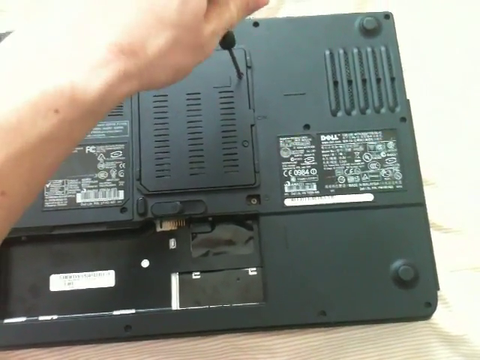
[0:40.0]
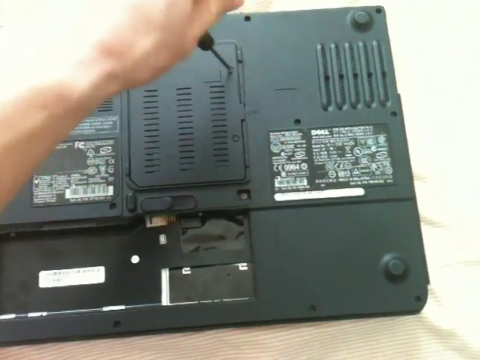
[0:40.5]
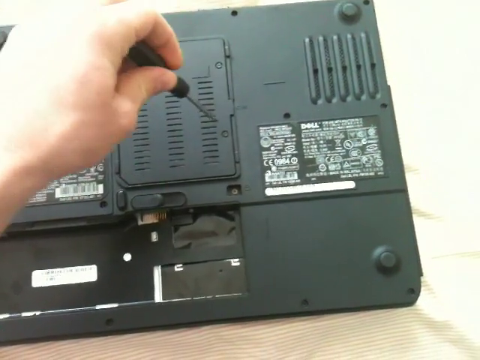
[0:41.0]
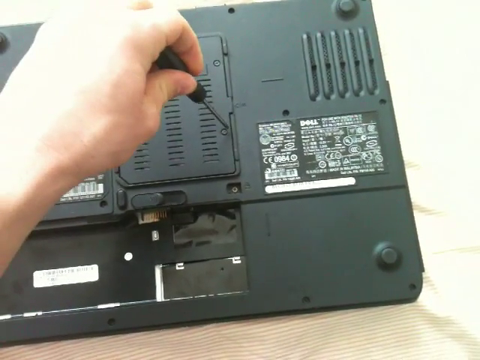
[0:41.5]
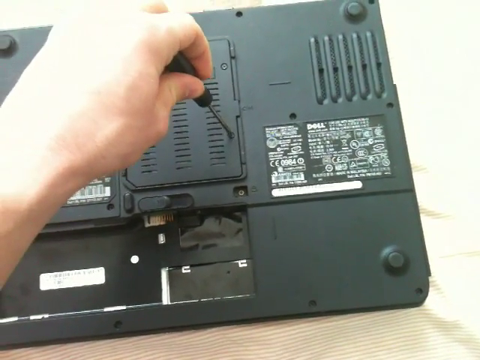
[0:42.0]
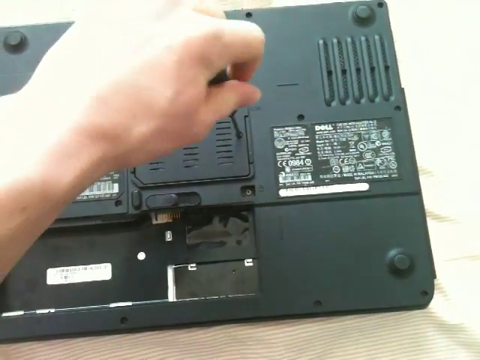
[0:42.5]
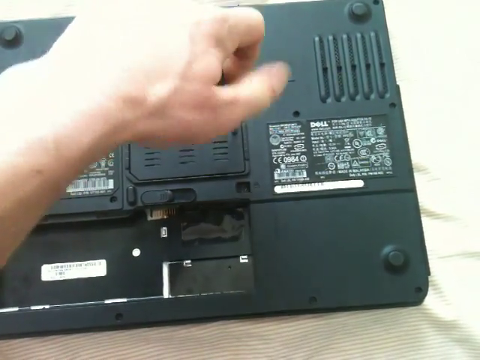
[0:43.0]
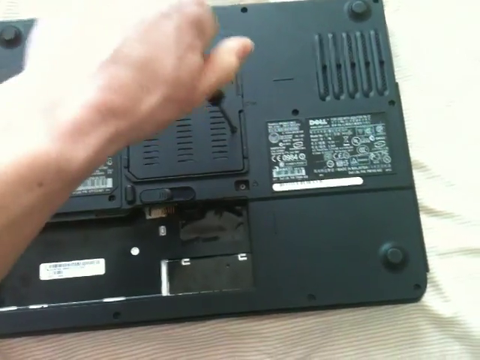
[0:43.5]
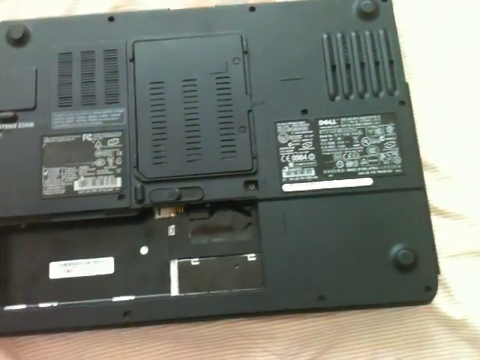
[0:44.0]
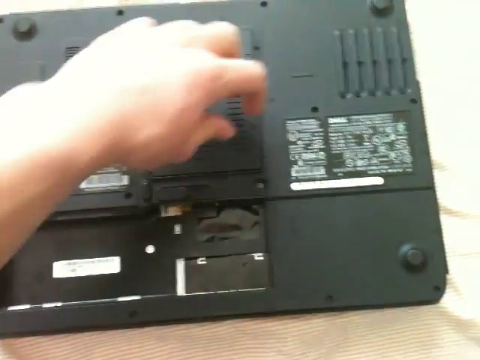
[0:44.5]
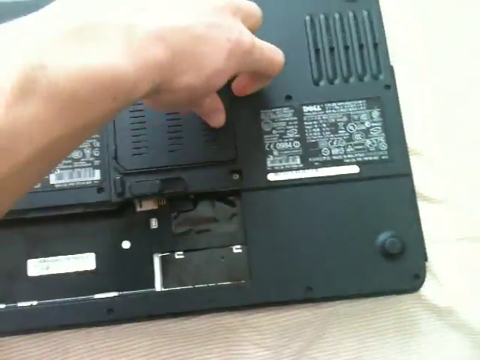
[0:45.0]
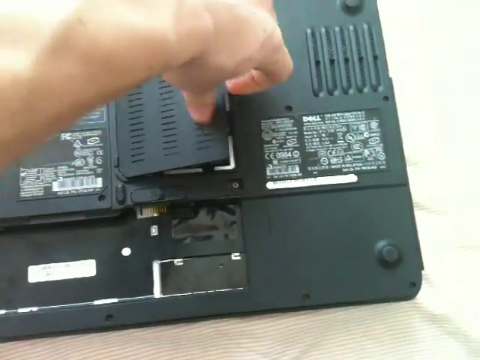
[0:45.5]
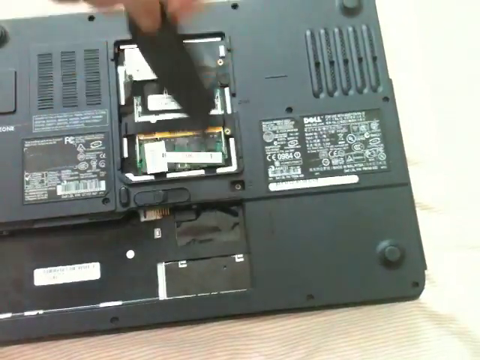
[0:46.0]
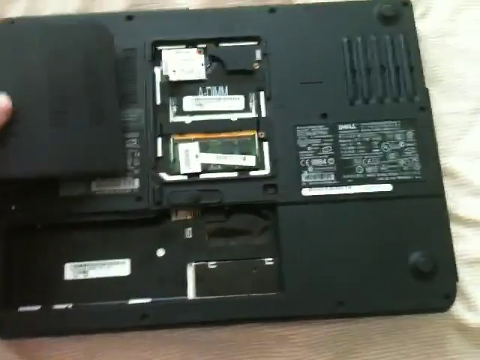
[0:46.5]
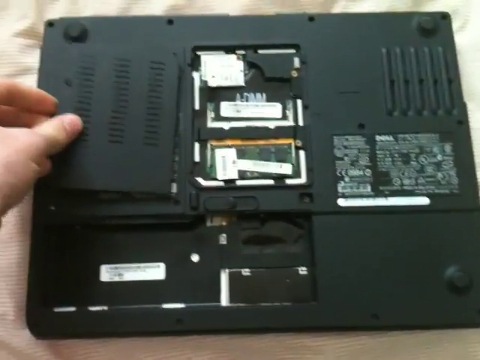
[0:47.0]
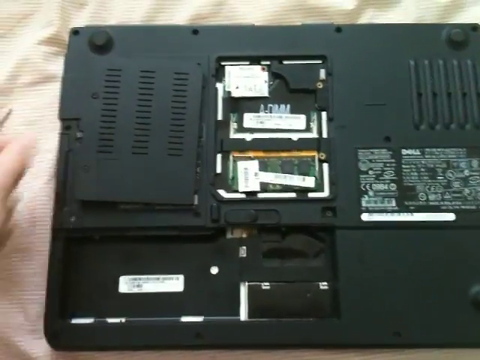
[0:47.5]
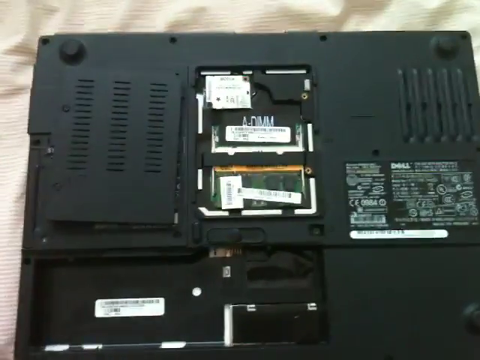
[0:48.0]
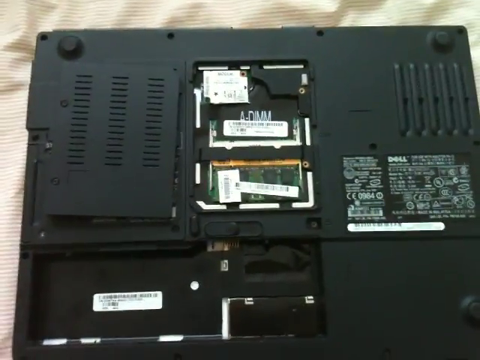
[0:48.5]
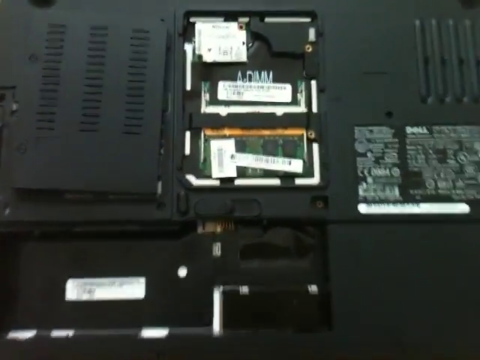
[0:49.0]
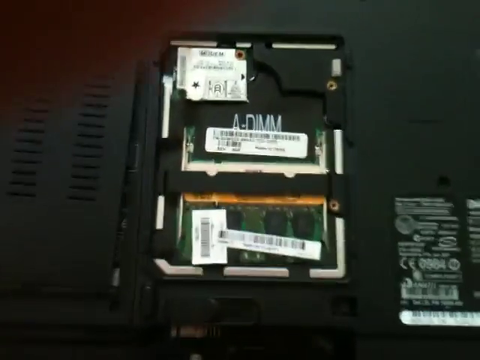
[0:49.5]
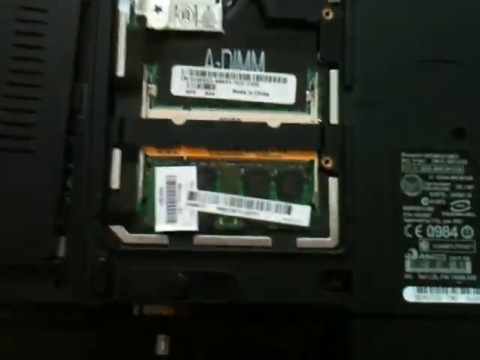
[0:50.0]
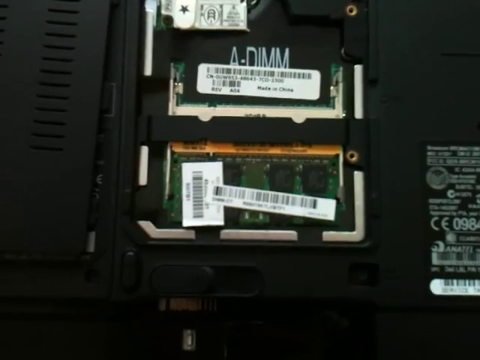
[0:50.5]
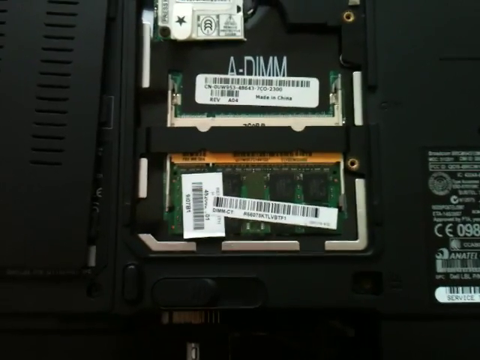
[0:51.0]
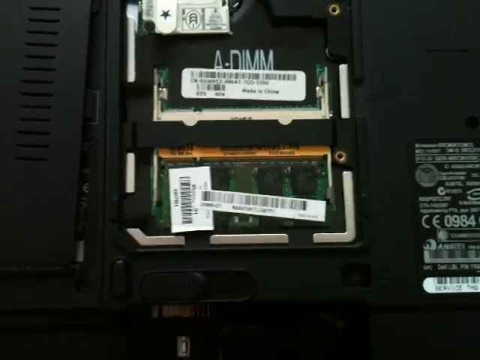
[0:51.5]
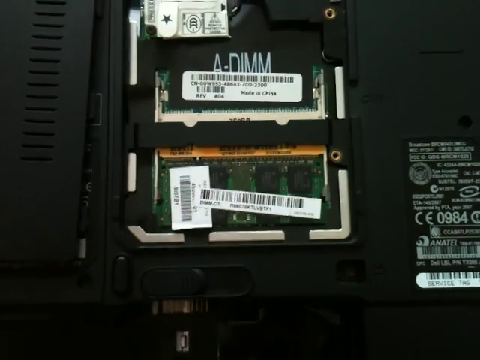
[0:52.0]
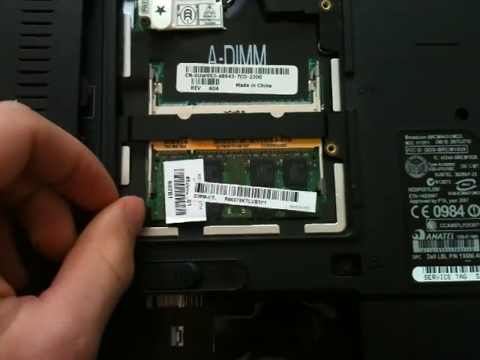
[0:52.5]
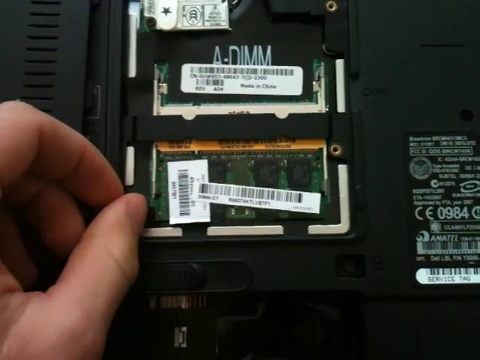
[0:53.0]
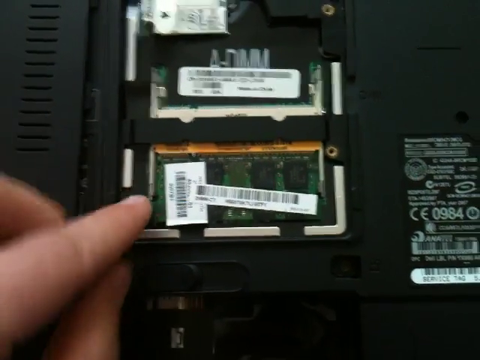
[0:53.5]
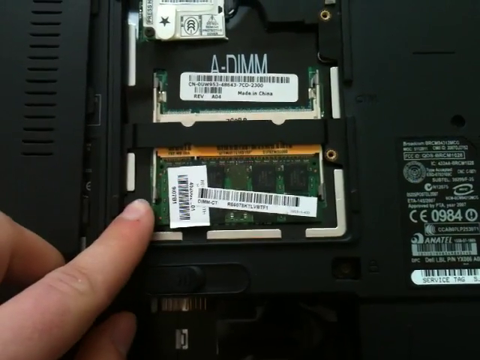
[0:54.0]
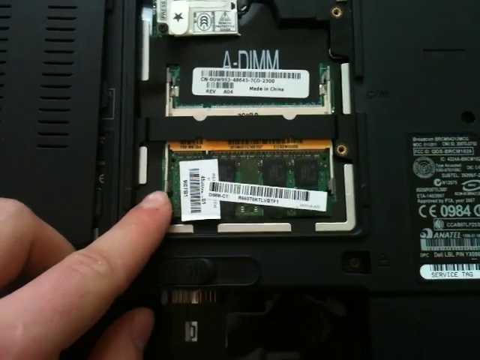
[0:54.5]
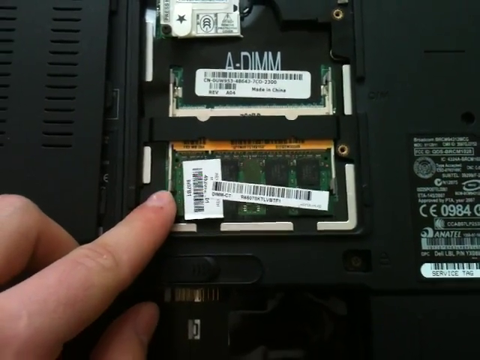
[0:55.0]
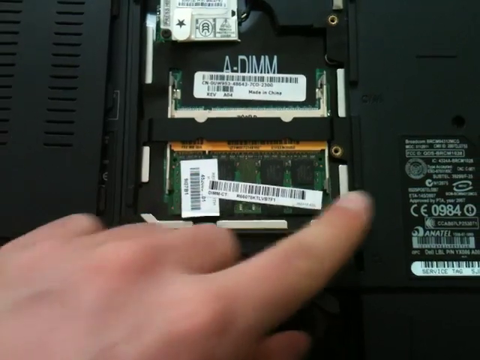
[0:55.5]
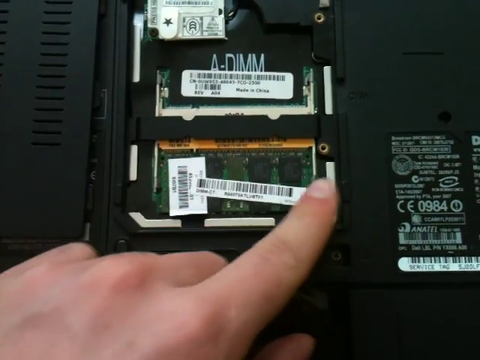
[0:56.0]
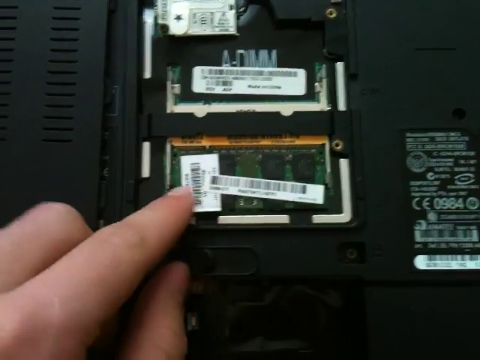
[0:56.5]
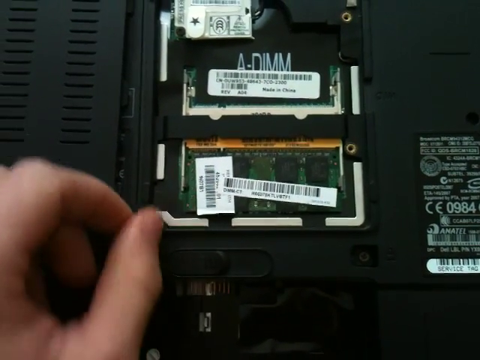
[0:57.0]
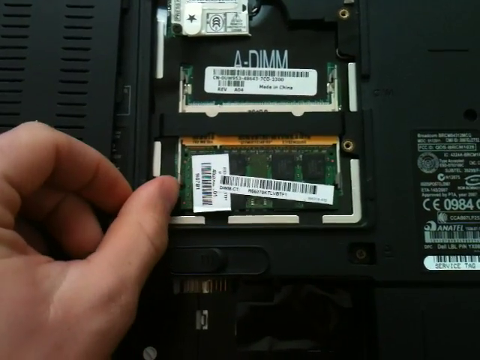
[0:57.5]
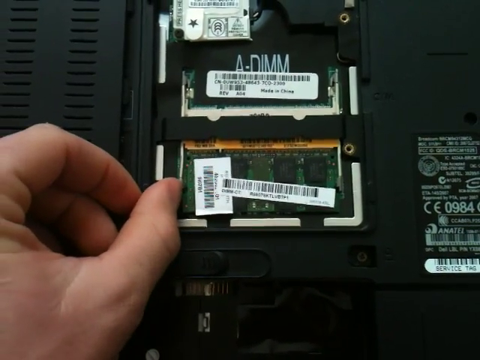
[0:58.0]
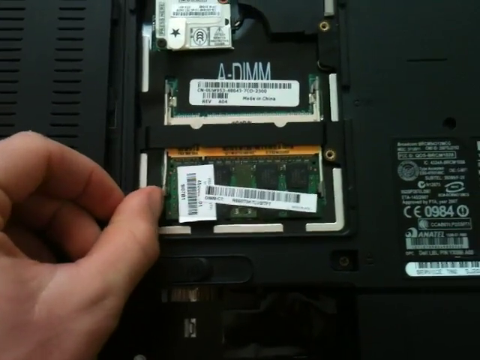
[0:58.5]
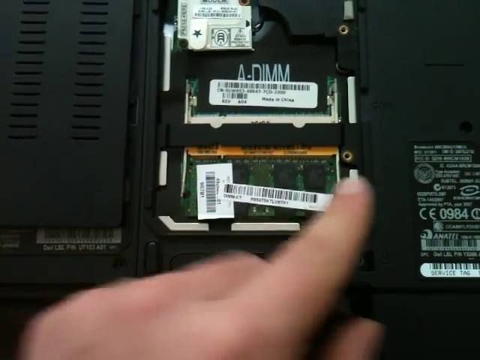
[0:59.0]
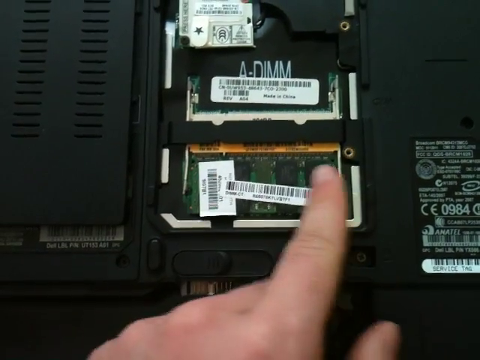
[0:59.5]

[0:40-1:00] The man uses the tool to open the device, undoing some small nuts and then opening up a cover, removing it from the back. He shows the inside of the part he has opened, revealing the device's internal parts. Some numbers are visible but not very clear.